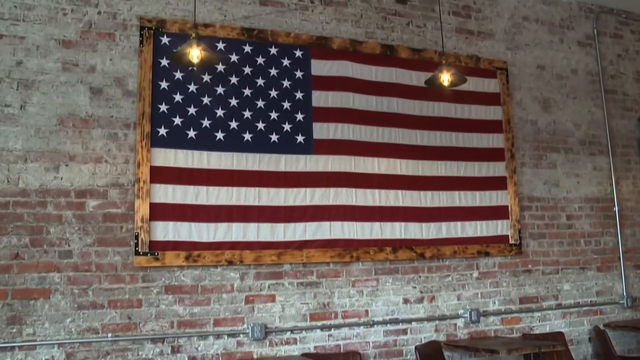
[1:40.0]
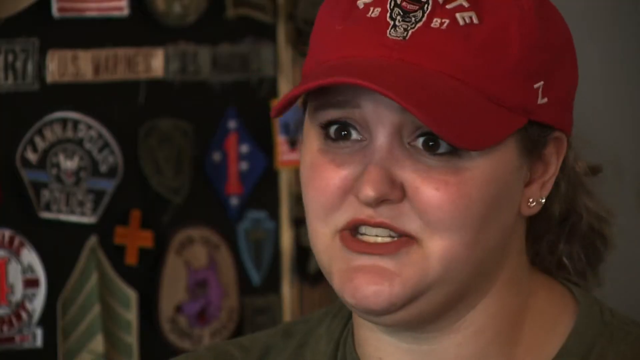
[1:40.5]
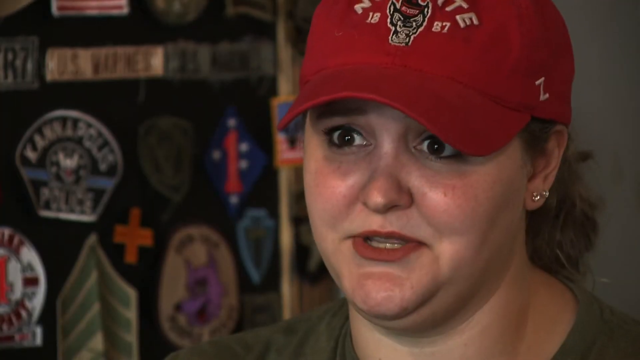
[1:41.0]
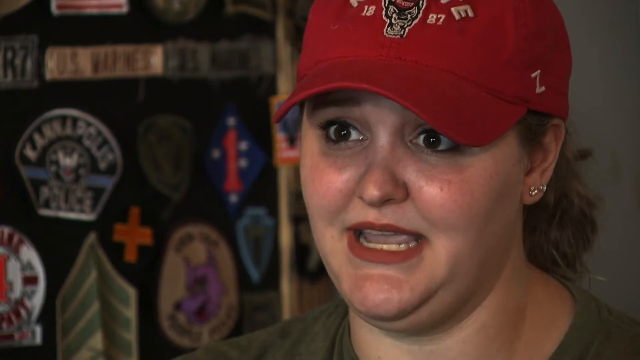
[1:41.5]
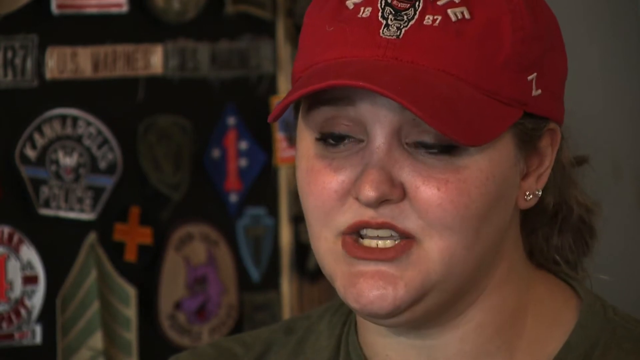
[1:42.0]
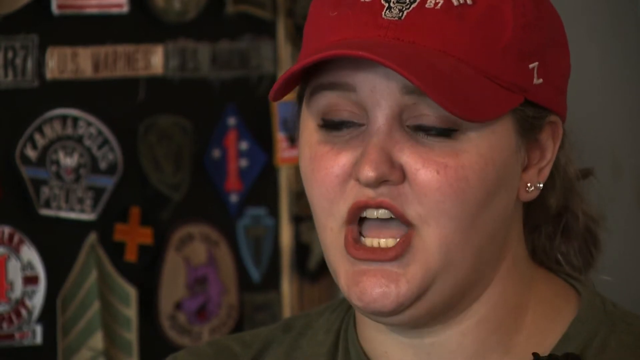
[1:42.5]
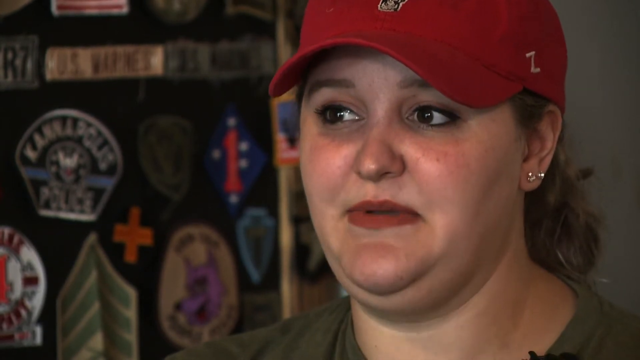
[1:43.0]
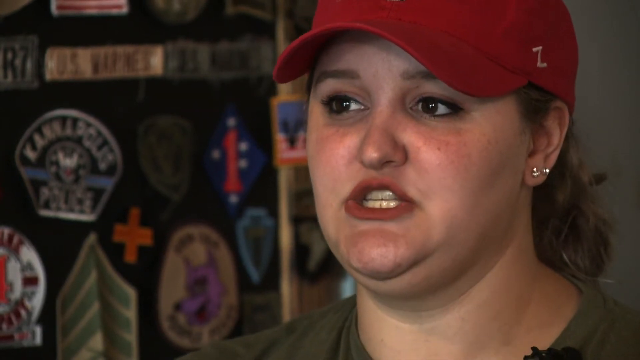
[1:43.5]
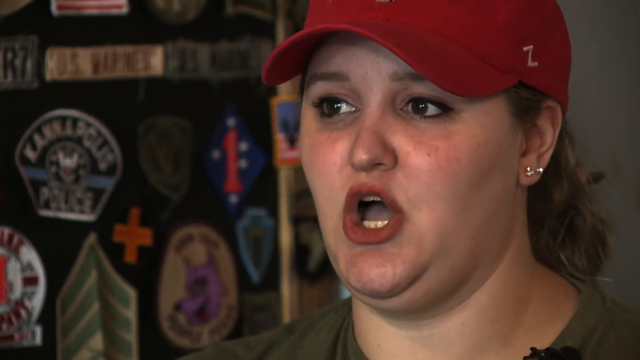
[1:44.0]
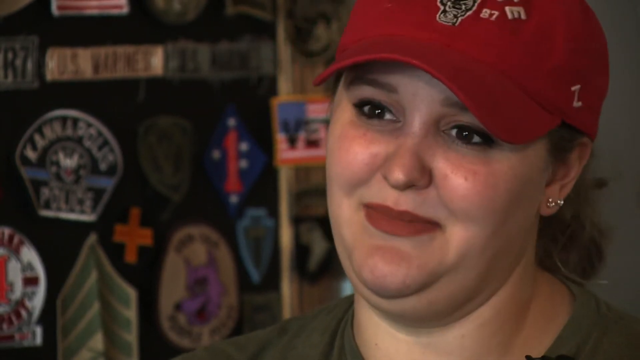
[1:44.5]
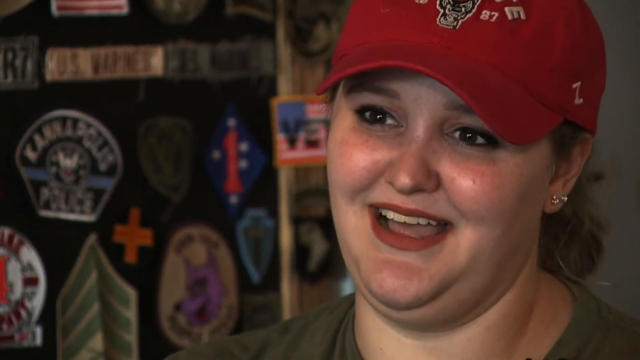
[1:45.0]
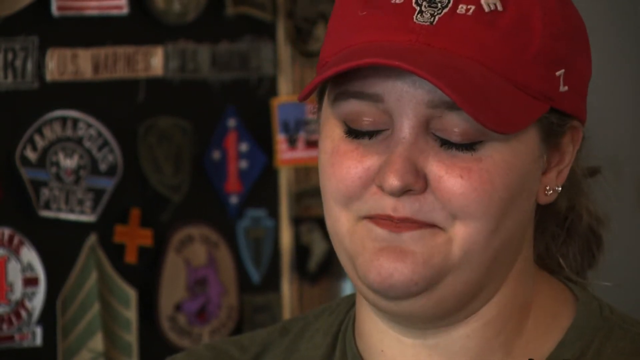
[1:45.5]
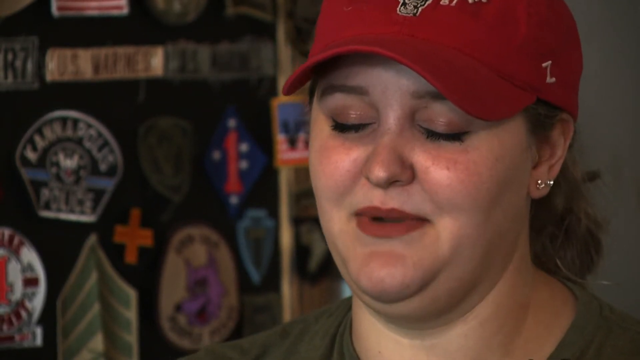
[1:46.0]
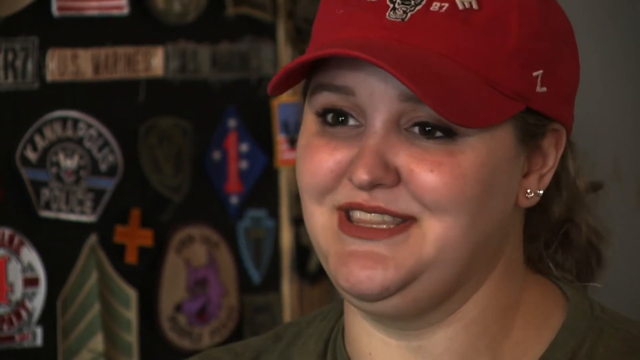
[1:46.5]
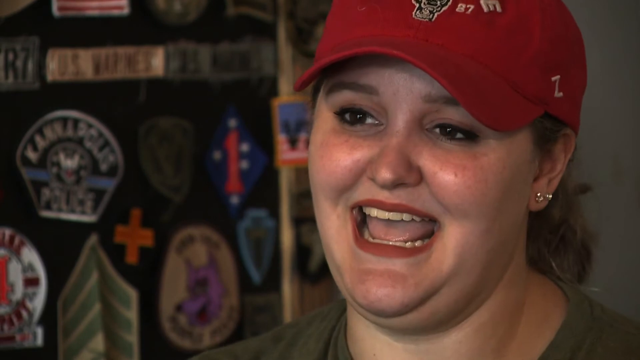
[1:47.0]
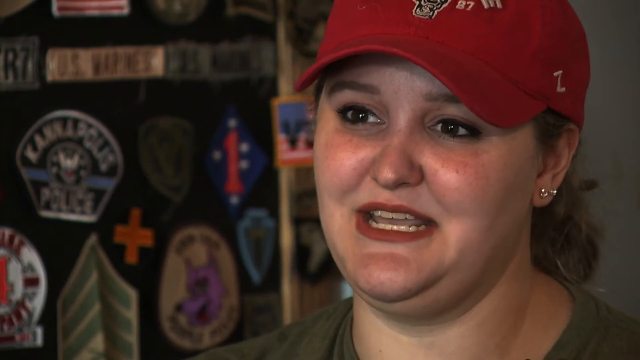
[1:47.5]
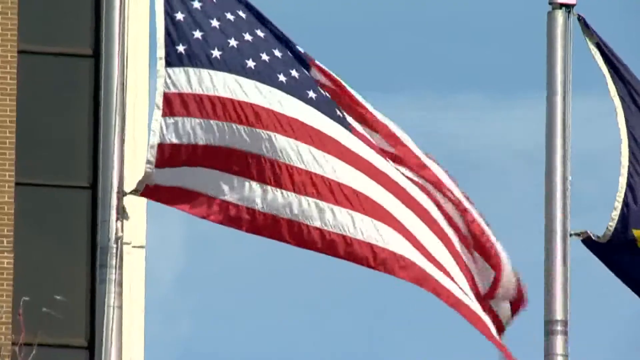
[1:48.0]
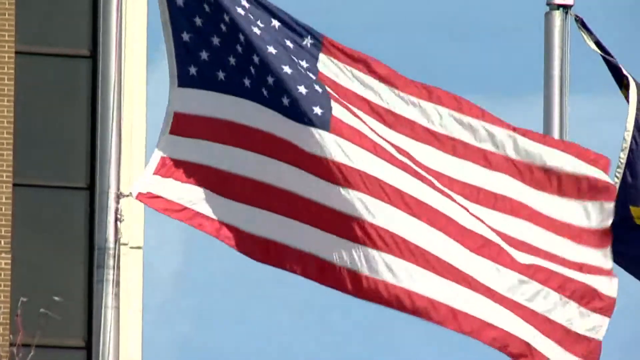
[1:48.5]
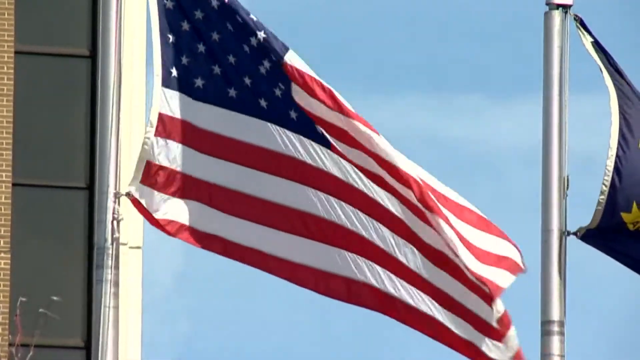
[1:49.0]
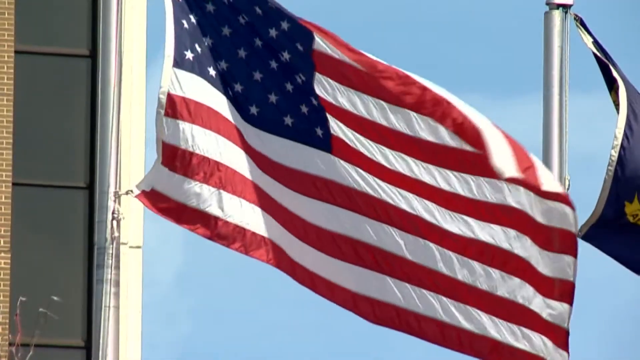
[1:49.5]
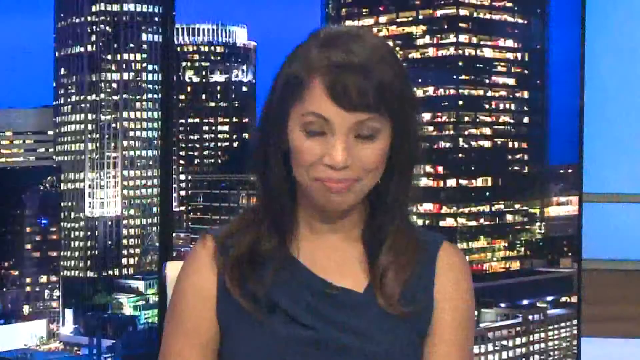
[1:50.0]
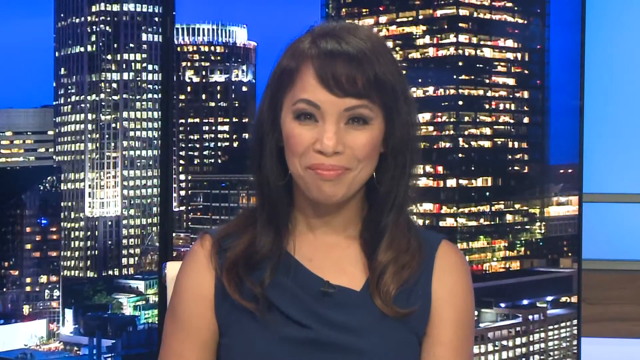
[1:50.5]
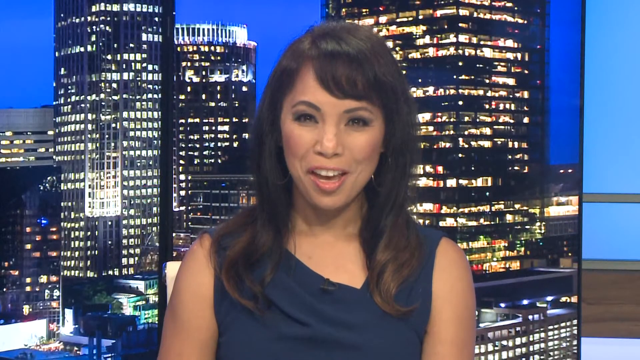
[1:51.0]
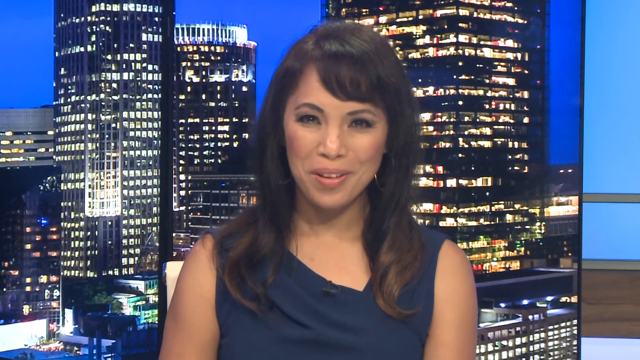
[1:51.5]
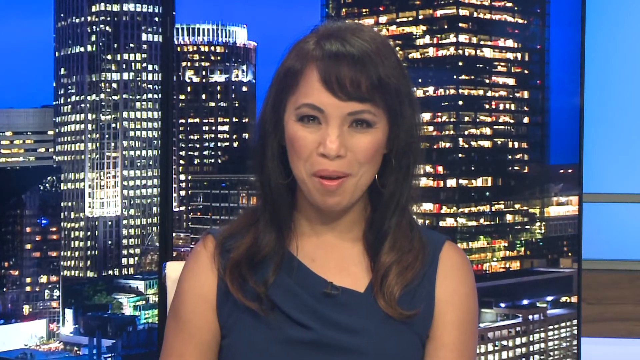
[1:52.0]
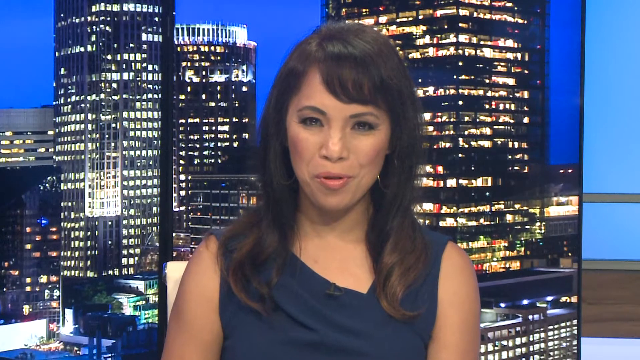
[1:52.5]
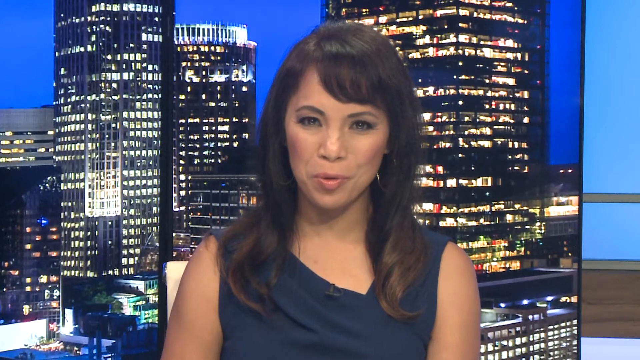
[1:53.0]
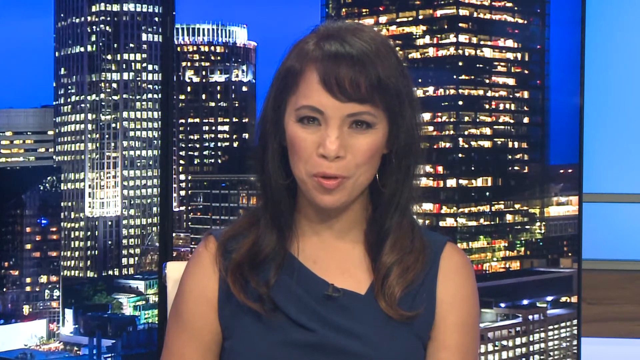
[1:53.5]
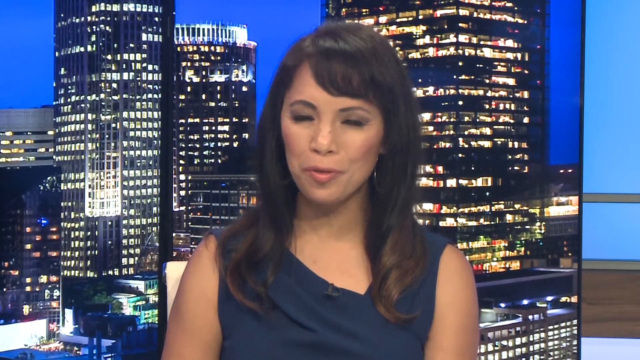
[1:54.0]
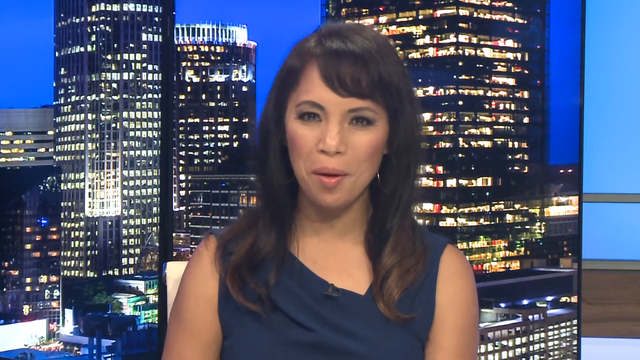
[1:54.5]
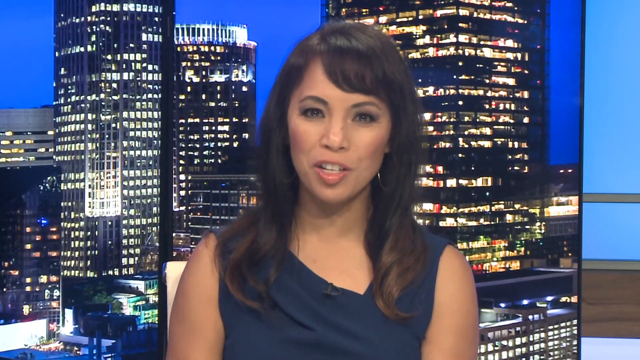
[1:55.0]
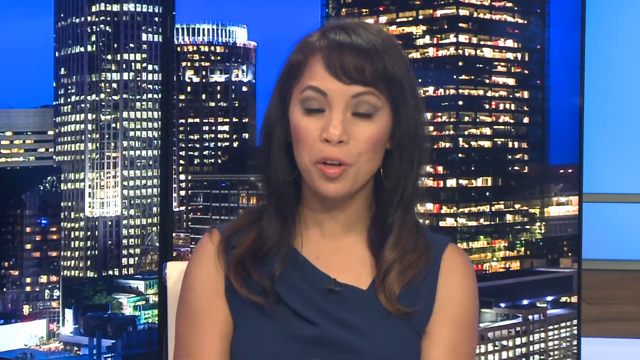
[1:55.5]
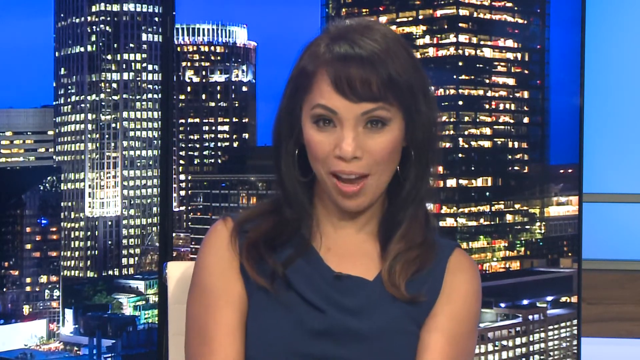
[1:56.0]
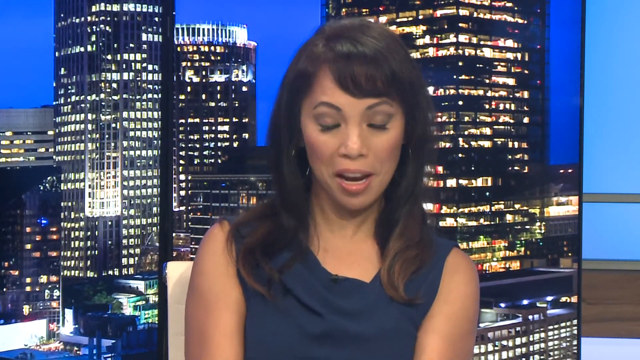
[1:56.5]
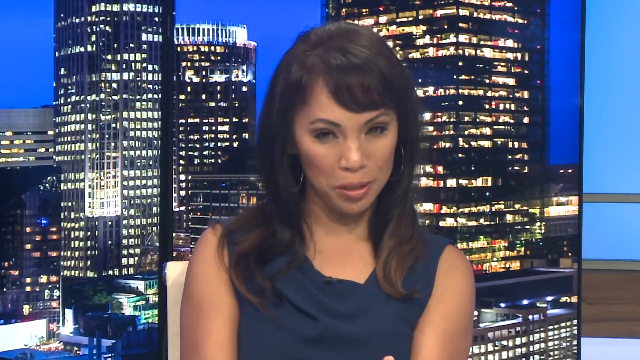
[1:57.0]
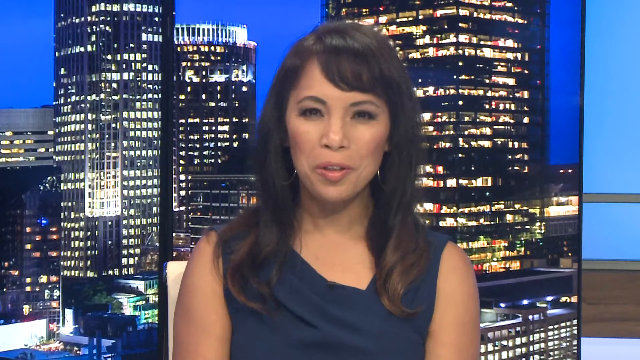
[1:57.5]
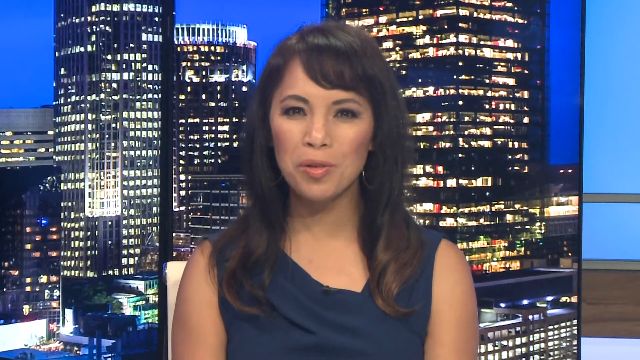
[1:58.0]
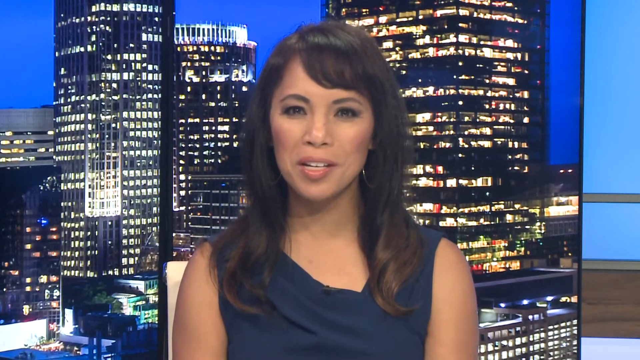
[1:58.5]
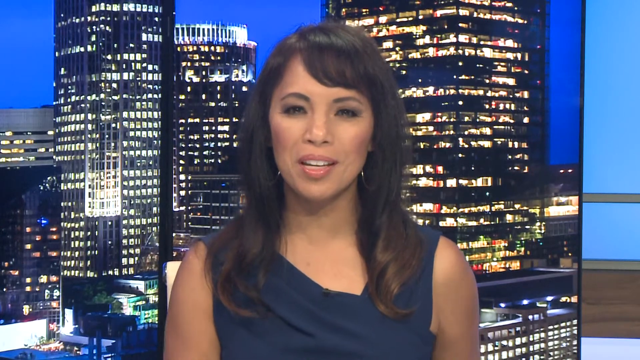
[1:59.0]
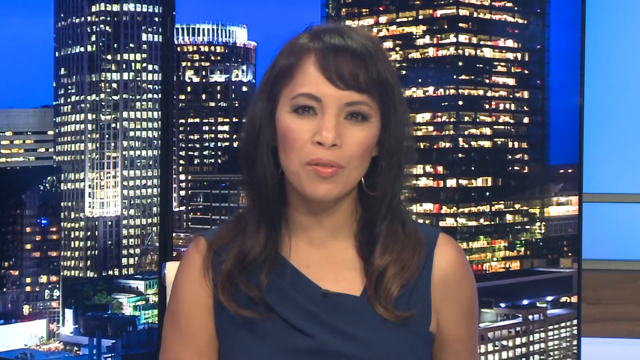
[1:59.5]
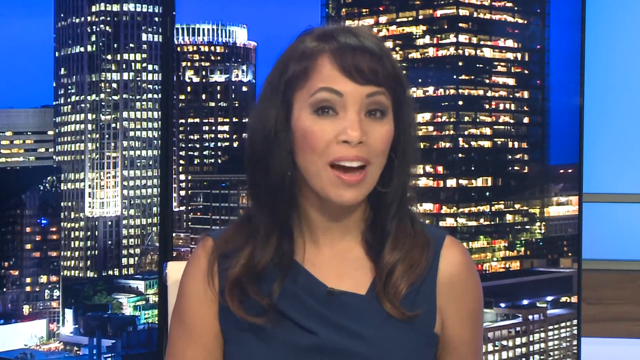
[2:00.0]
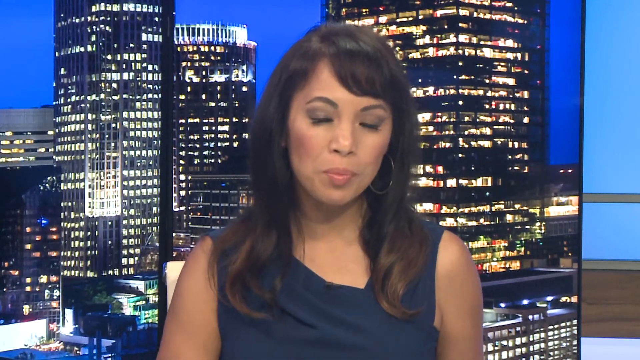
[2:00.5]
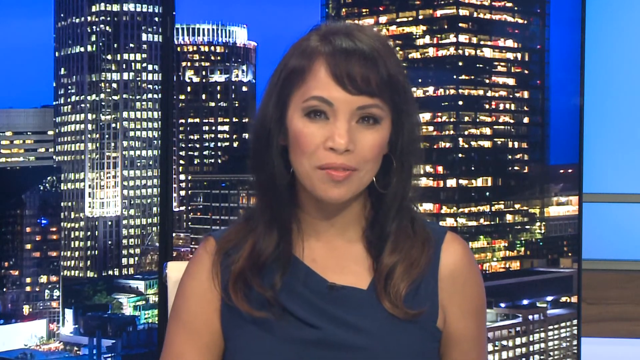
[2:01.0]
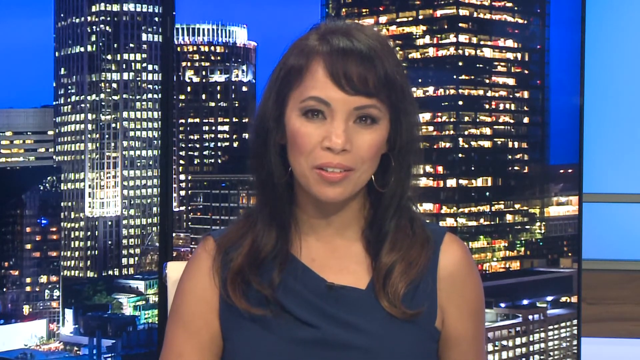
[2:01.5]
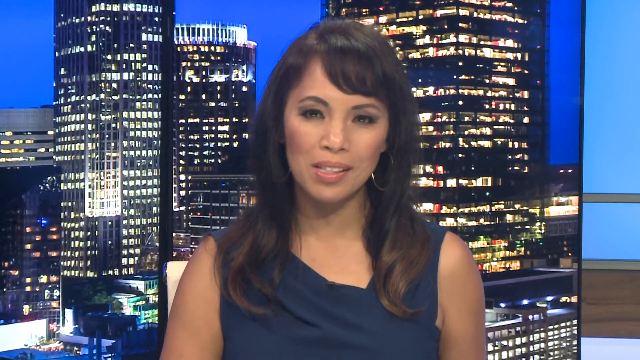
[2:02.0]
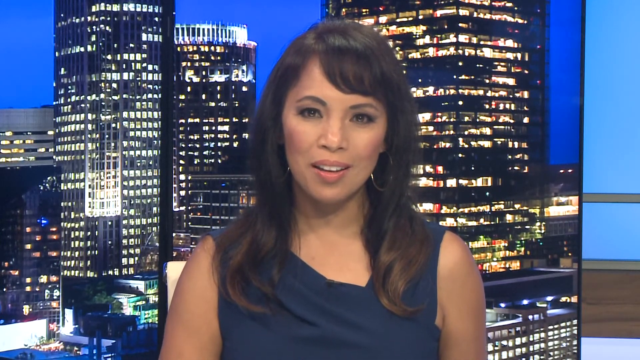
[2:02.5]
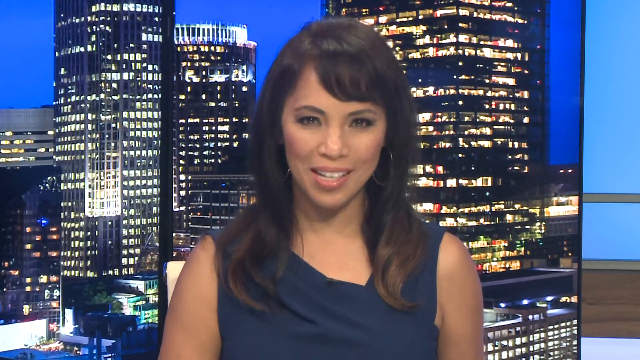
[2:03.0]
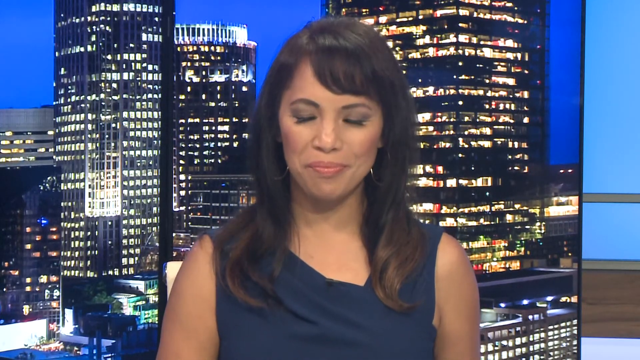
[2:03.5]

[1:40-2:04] The same woman who works in the coffee shop continues to be interviewed. The video then transitions to an American flag on a pole outside, flowing in the wind. At the very end, the video returns to the news reporter in the studio, who is talking. She is no longer in front of the Independence Day slide; the slide now shows tall buildings and it appears to be night time, probably an image placed on the slide rather than a live view. Overall it is a news clip celebrating American Independence Day.